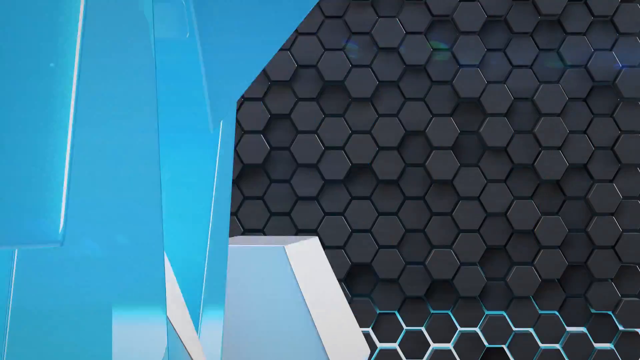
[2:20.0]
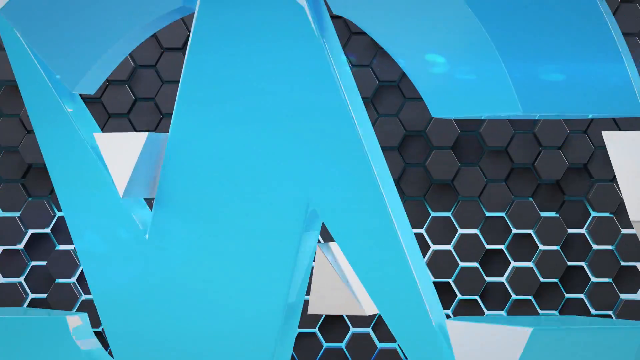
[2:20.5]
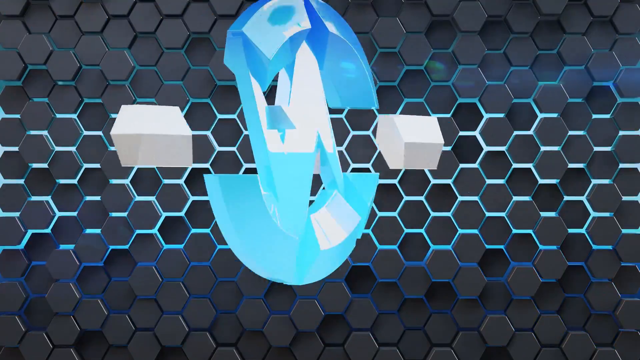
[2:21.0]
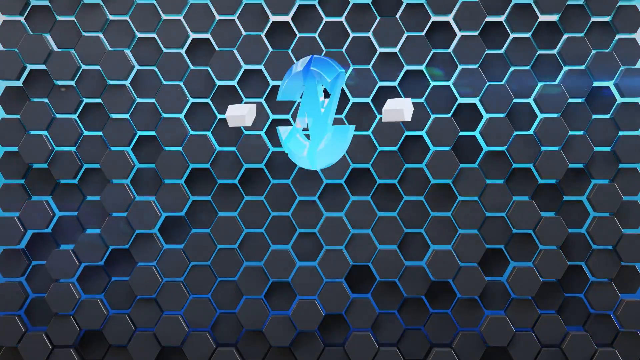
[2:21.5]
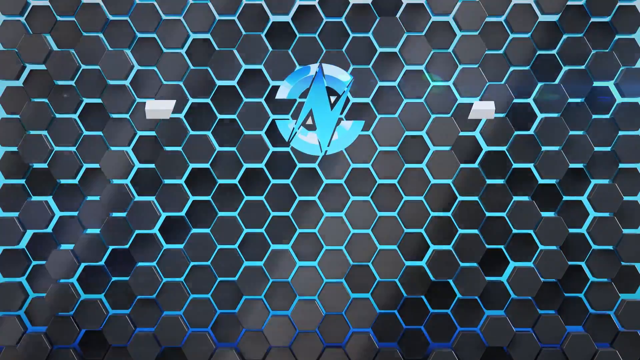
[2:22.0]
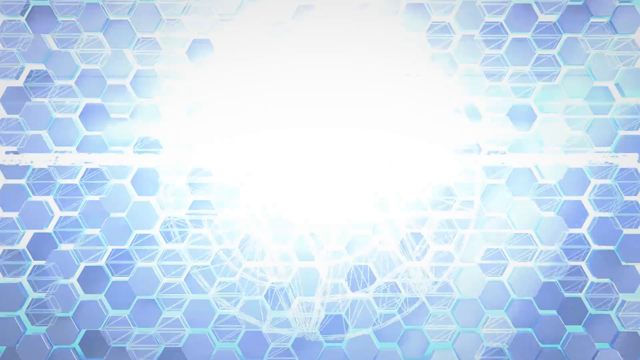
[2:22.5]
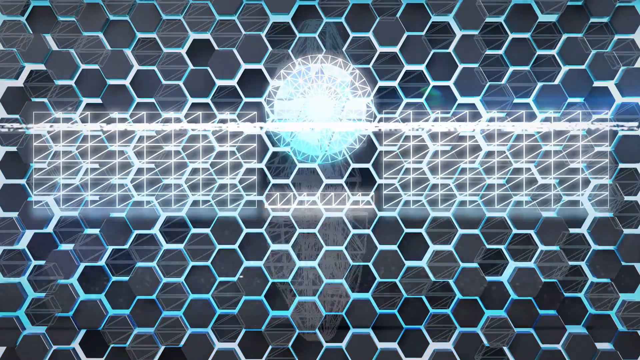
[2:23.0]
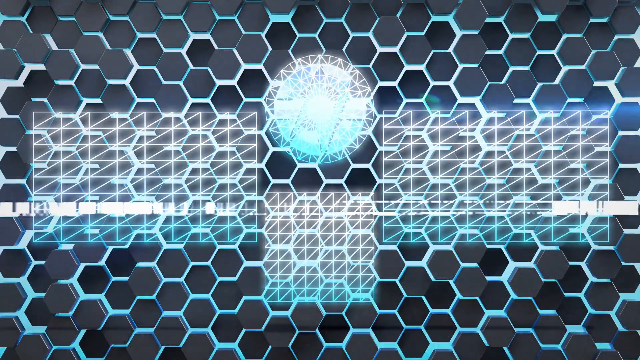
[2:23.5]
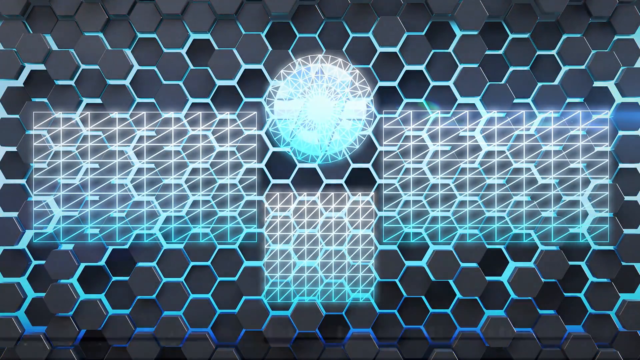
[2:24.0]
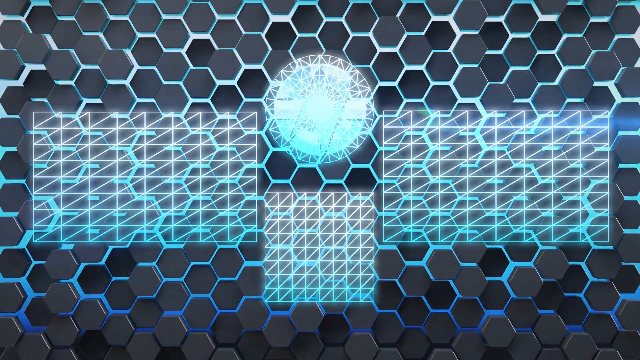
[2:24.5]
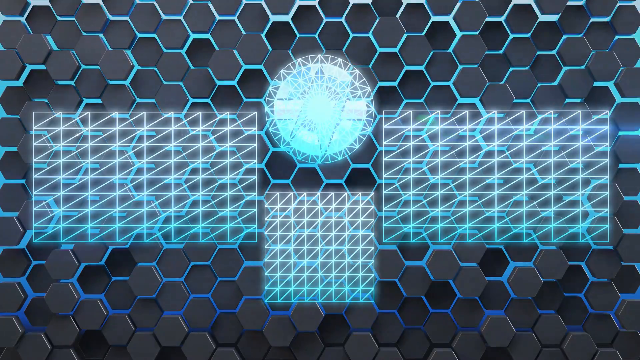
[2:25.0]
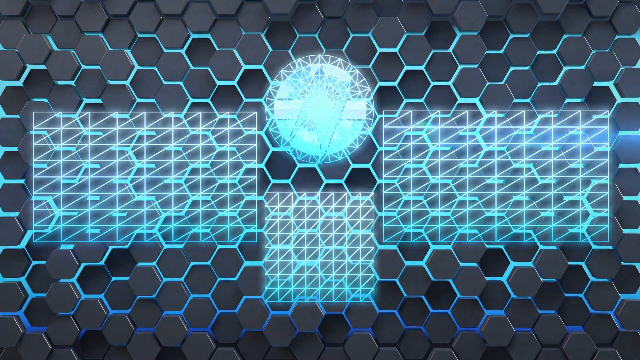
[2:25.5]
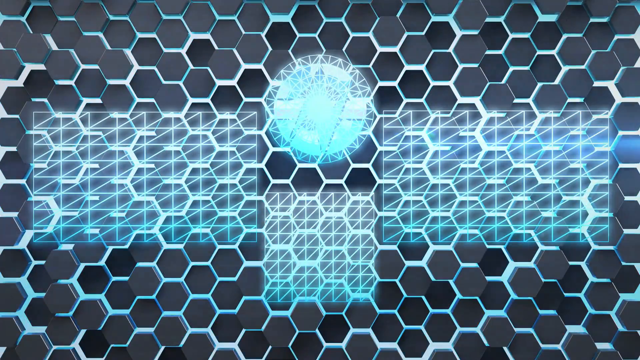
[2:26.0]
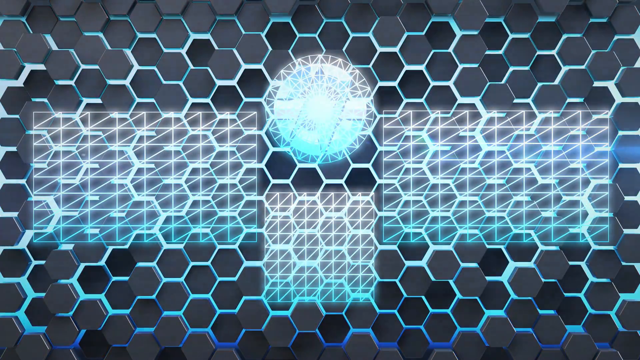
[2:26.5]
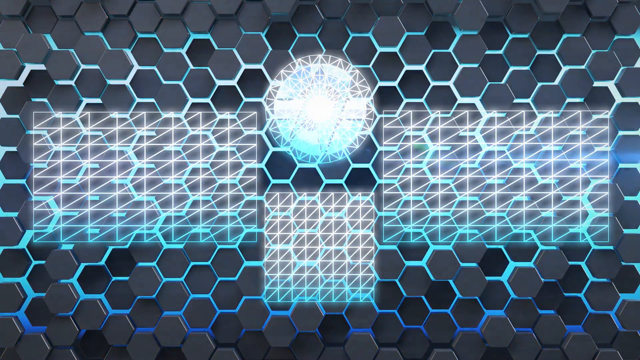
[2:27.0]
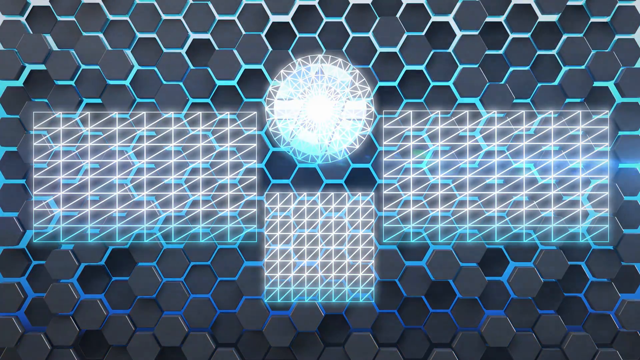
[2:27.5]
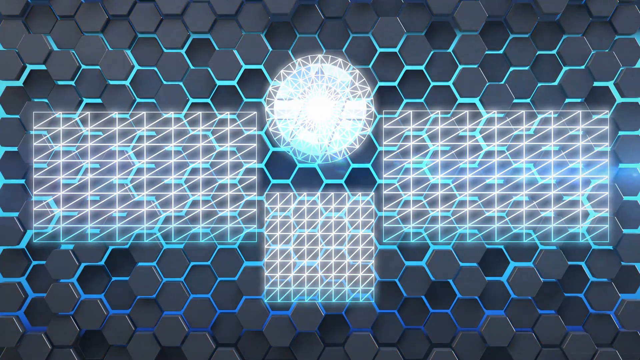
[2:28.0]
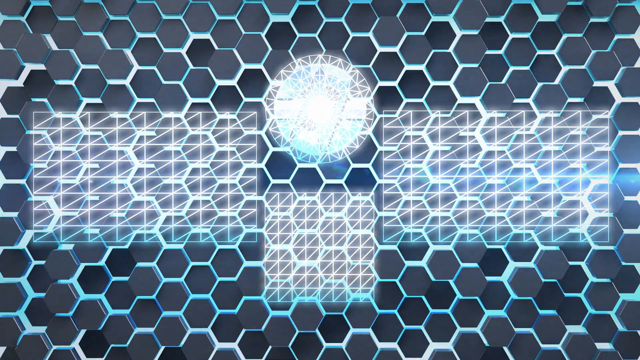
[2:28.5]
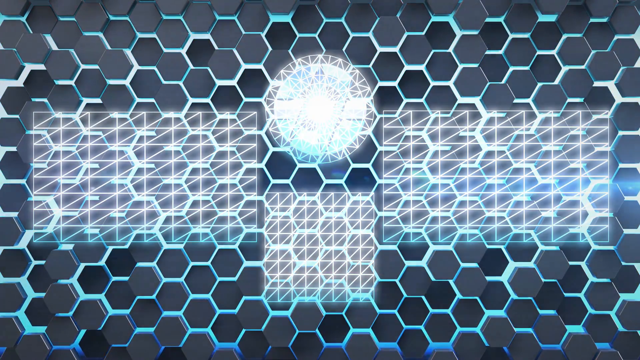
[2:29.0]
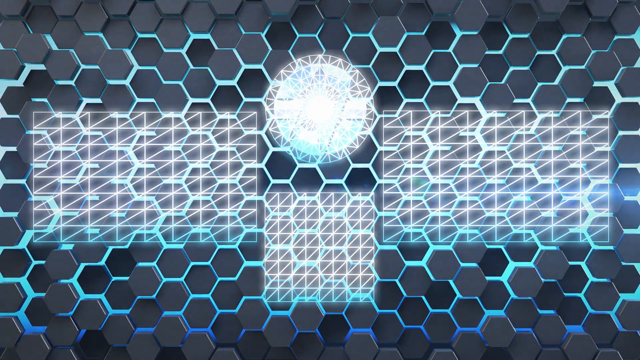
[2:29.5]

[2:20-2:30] A blue and black screen shows the Nexus logo, an N that kind of looks like a lightning bolt, in light blue, with grid work. The blue seems to be kind of flashing. This appears to be the end of the video.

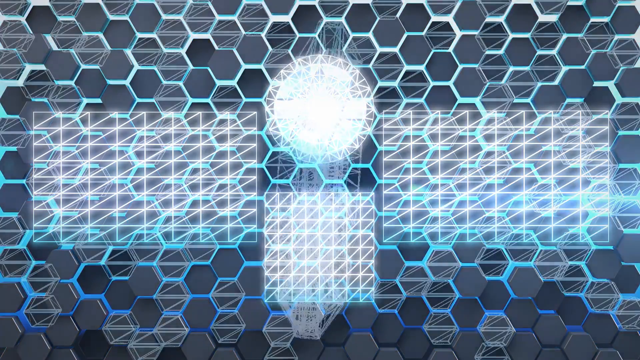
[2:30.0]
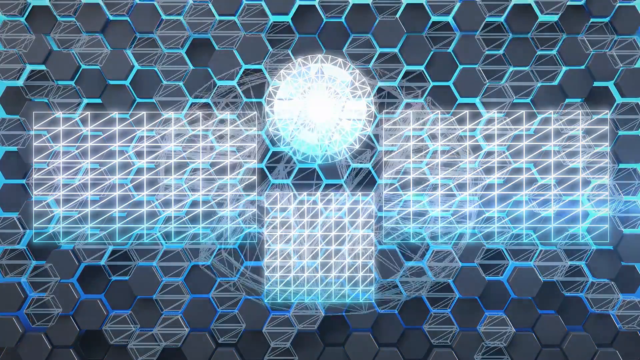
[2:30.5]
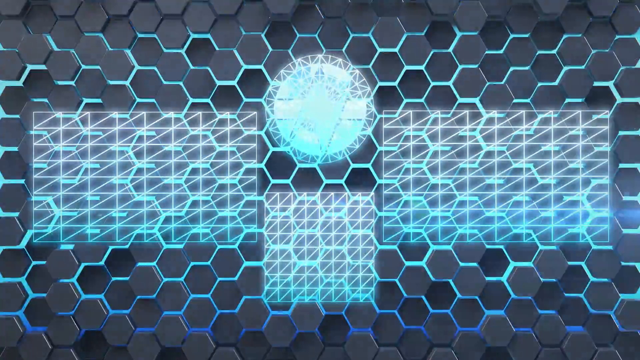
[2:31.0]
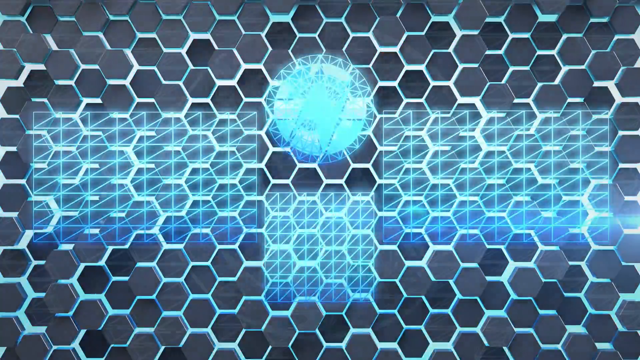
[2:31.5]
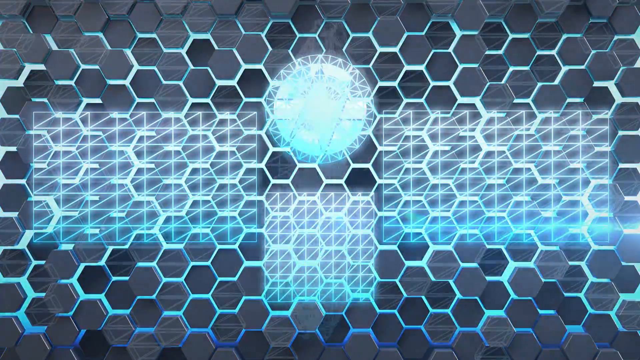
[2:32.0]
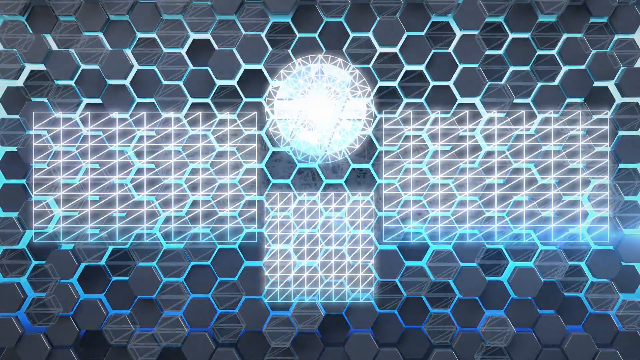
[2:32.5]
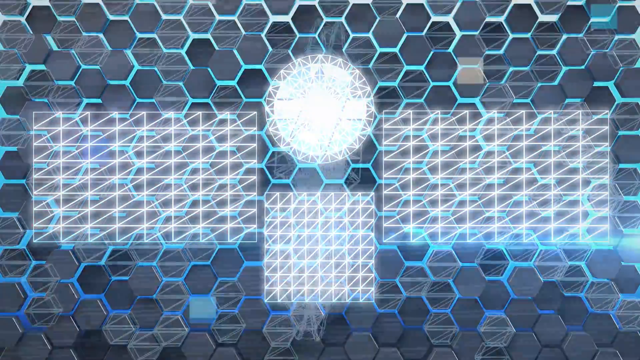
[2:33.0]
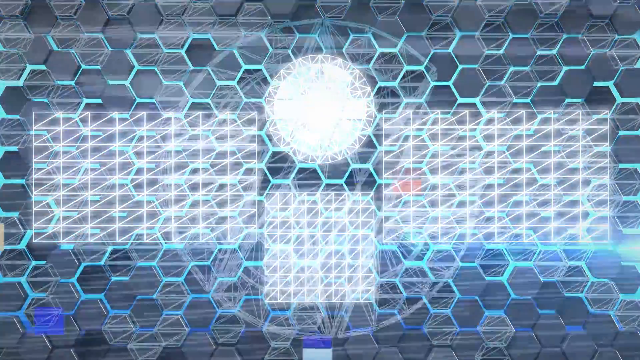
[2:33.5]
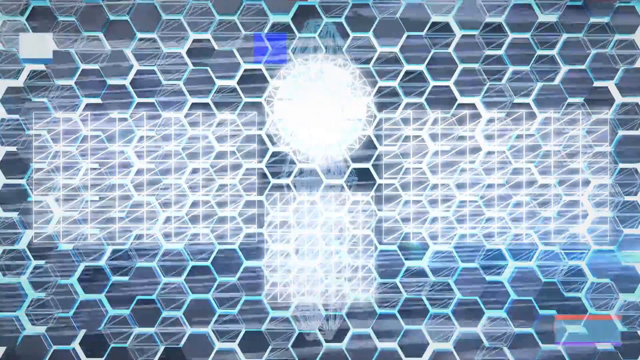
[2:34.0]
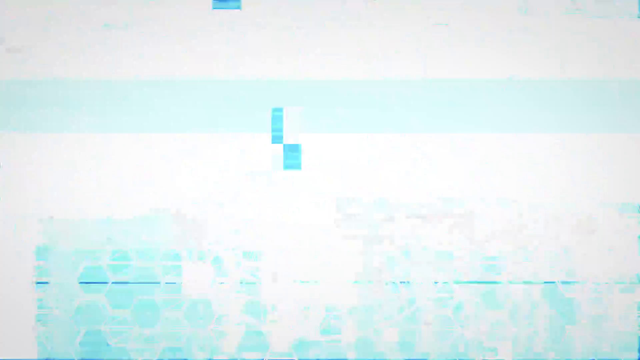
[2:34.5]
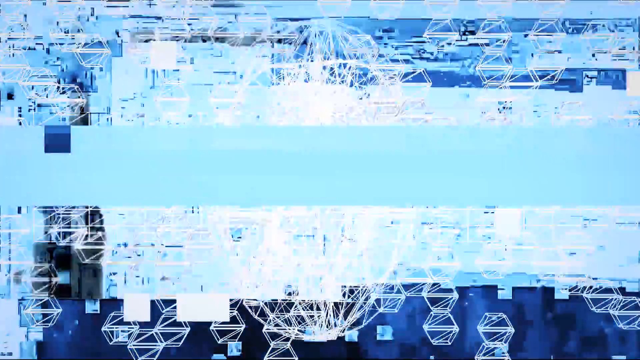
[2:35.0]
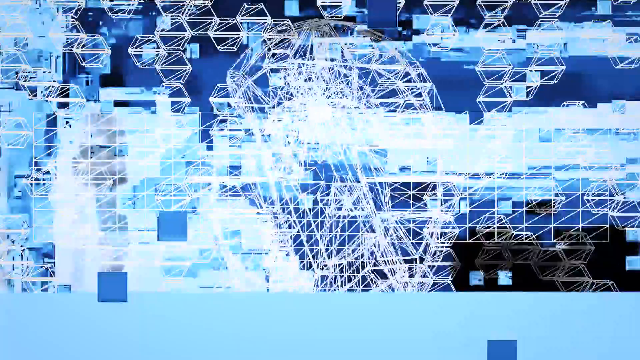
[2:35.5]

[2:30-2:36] The Nexus logo, a big light blue N that looks like a lightning bolt, appears with grid work in the background, kind of looking like electricity surging through it. Something looks like it is rotating, like a little force field. In the last second there is what looks like an explosion, a bright light, and then the Nexus logo is shown again.